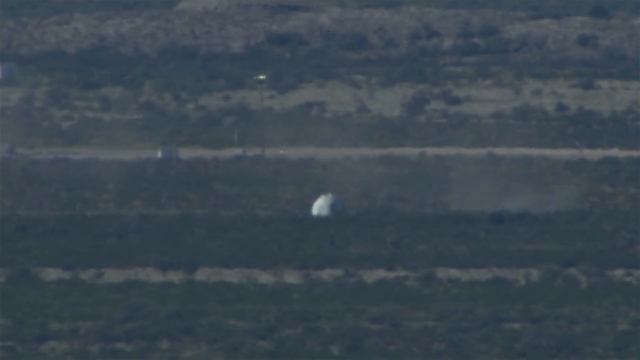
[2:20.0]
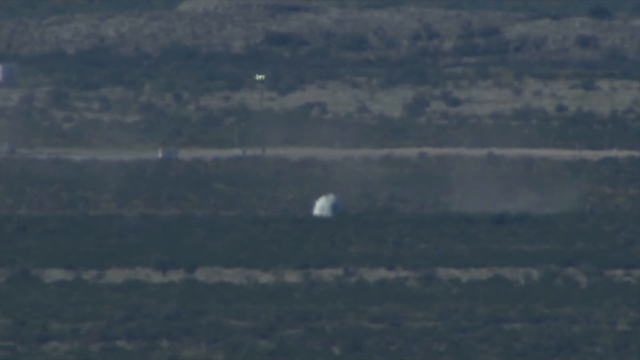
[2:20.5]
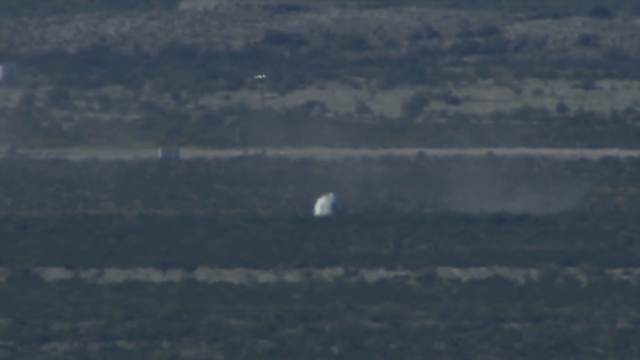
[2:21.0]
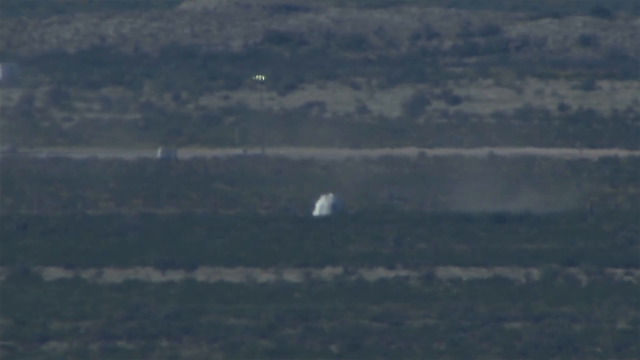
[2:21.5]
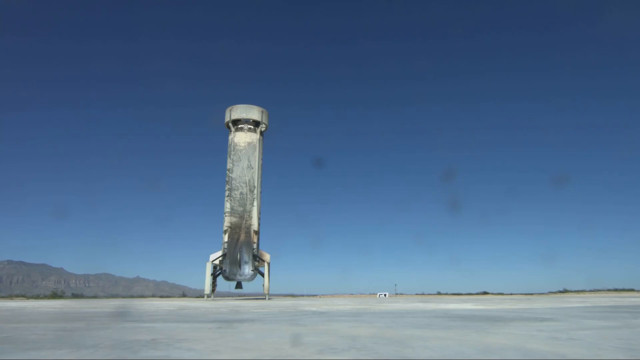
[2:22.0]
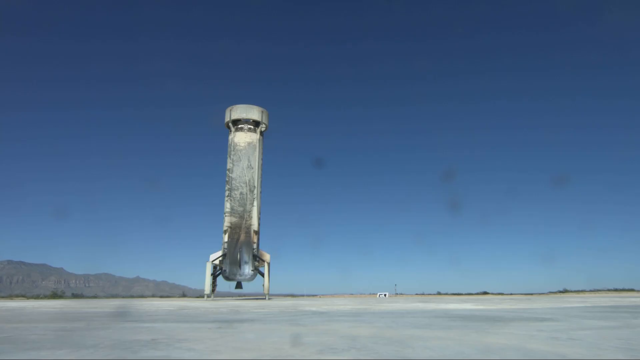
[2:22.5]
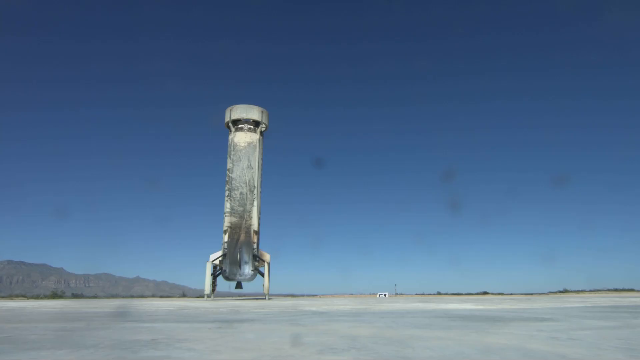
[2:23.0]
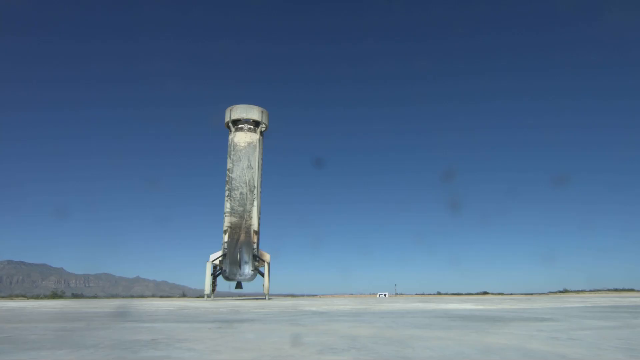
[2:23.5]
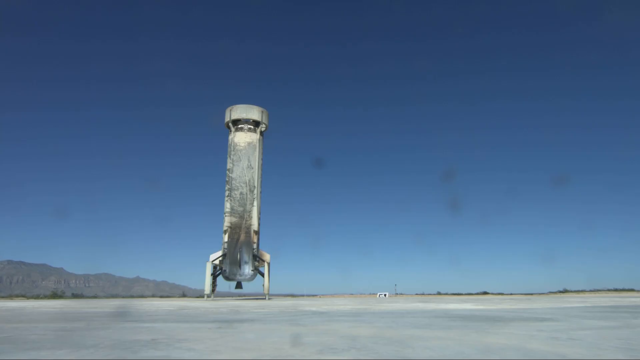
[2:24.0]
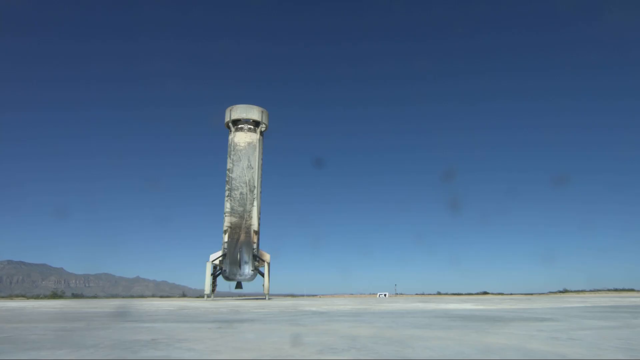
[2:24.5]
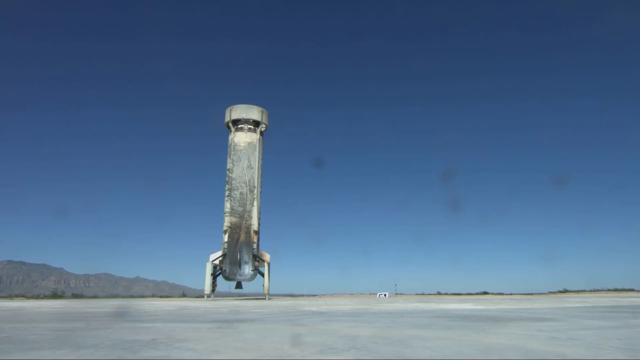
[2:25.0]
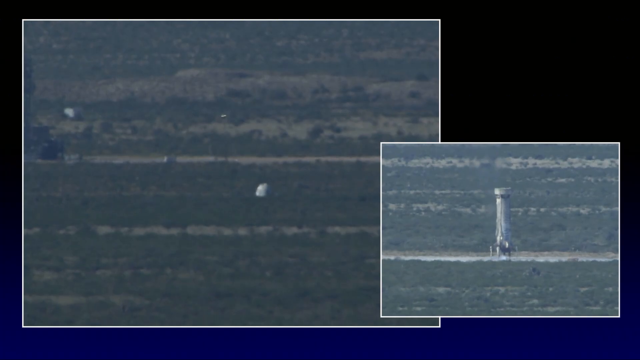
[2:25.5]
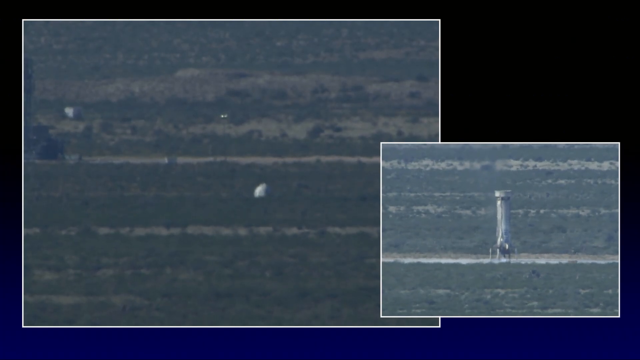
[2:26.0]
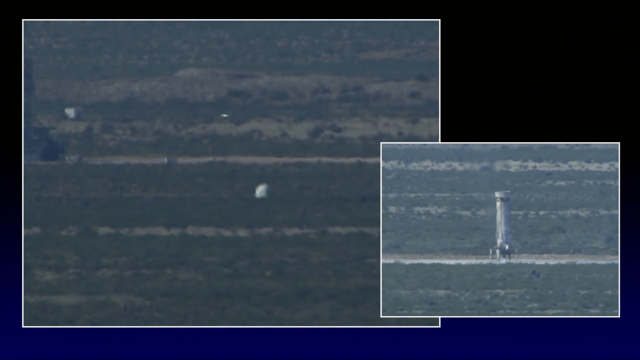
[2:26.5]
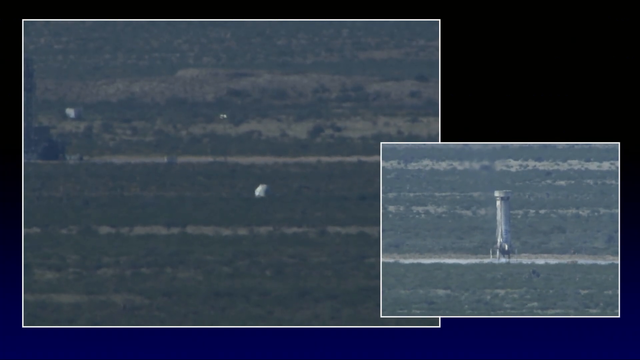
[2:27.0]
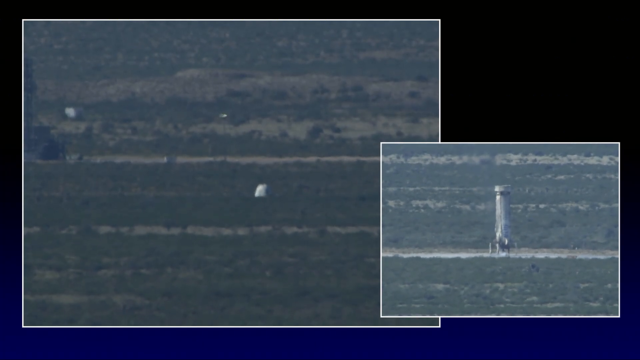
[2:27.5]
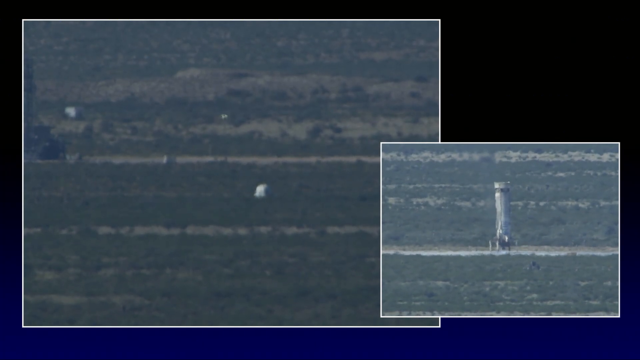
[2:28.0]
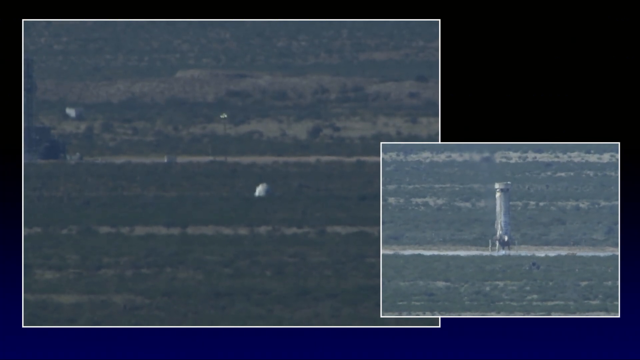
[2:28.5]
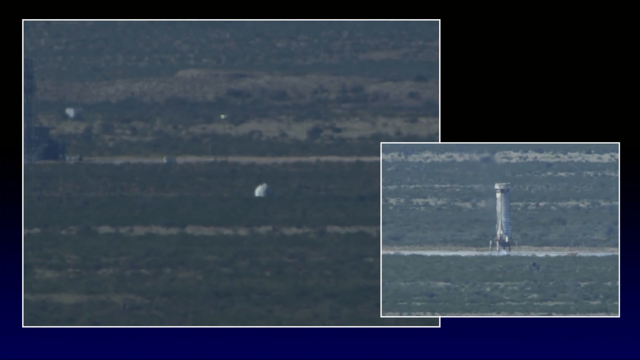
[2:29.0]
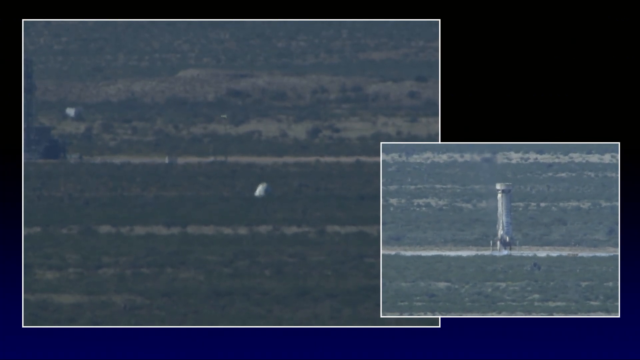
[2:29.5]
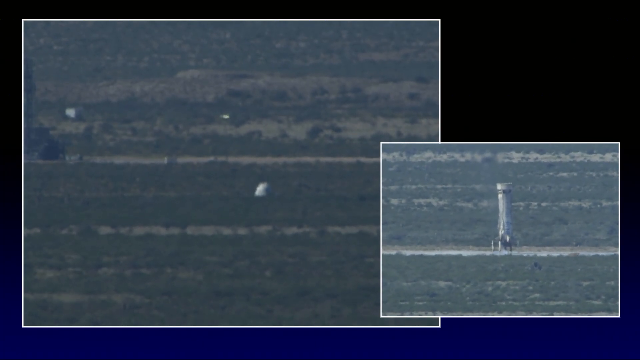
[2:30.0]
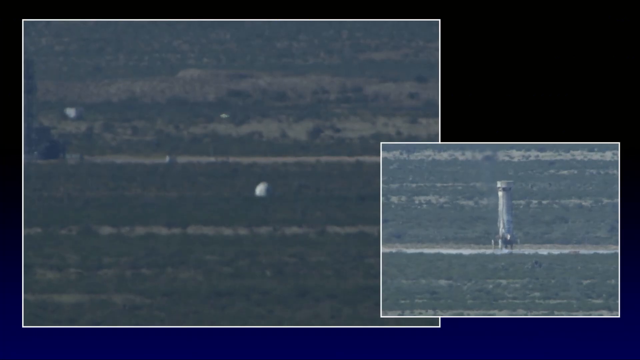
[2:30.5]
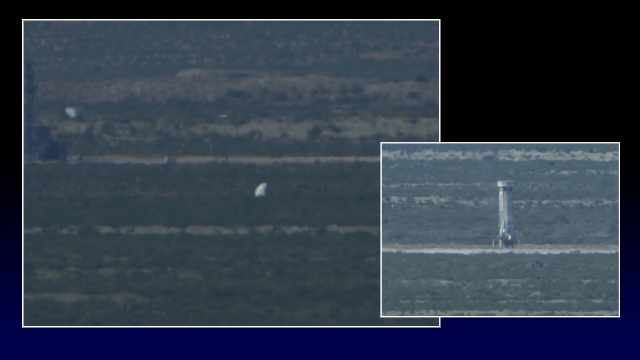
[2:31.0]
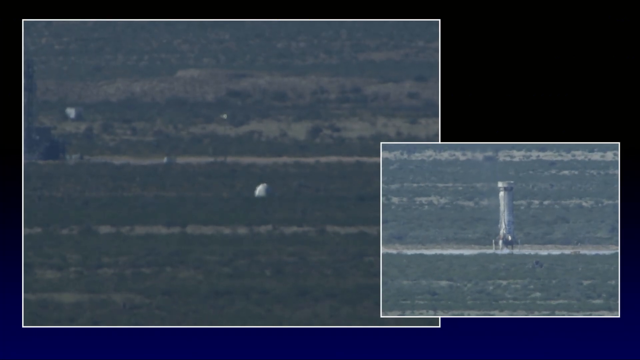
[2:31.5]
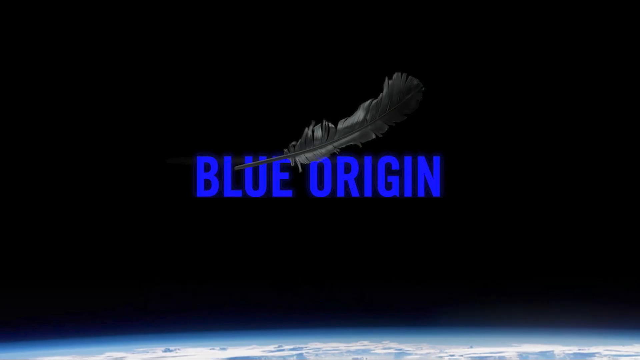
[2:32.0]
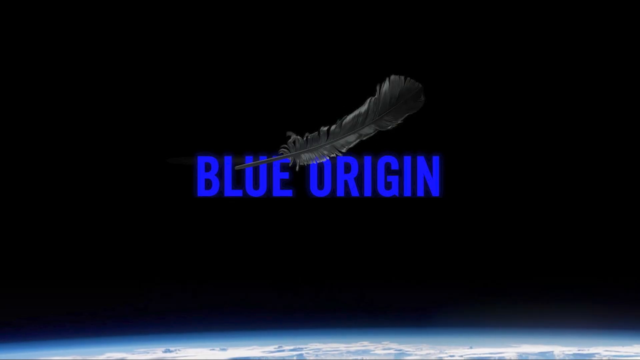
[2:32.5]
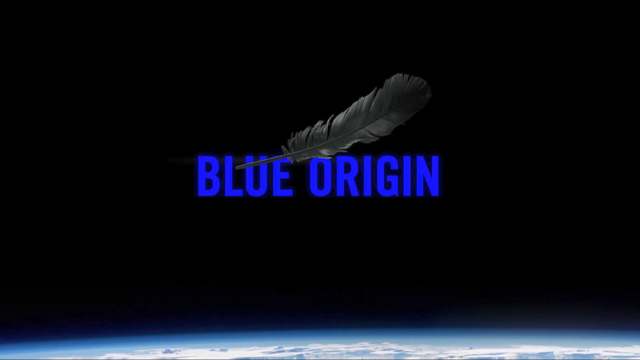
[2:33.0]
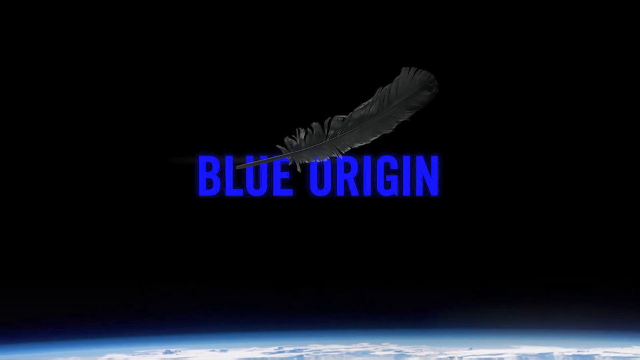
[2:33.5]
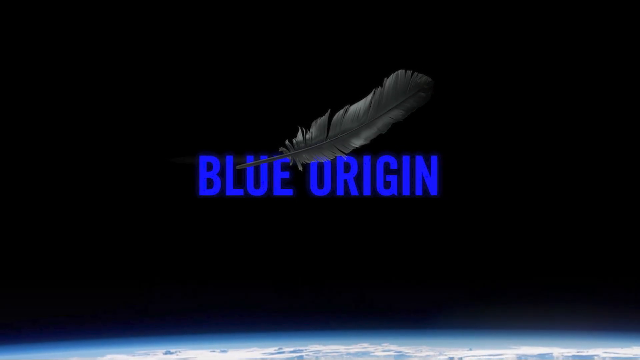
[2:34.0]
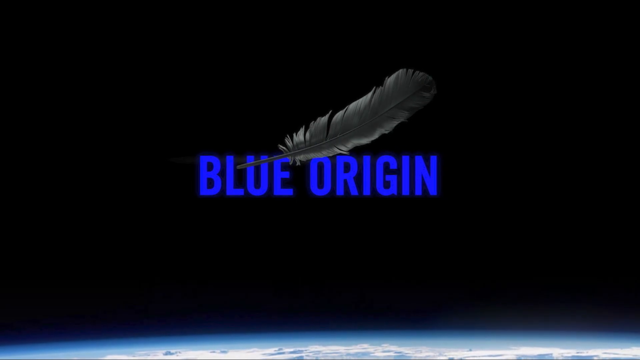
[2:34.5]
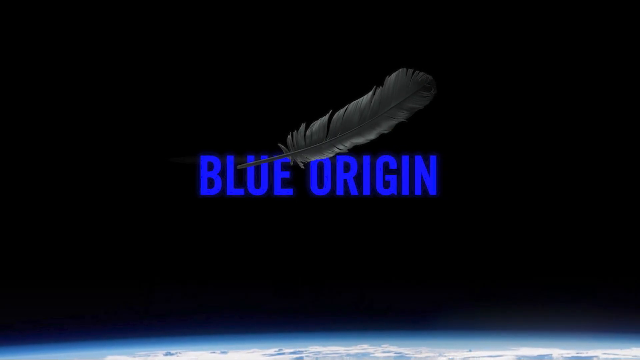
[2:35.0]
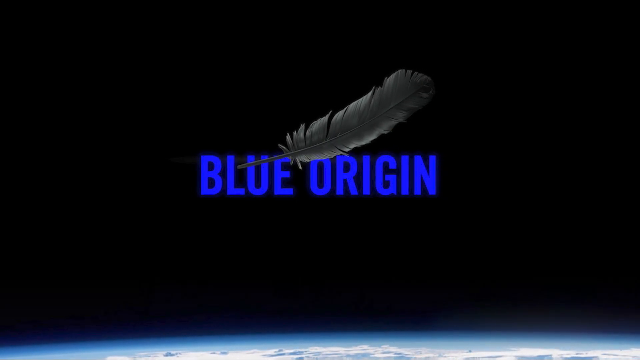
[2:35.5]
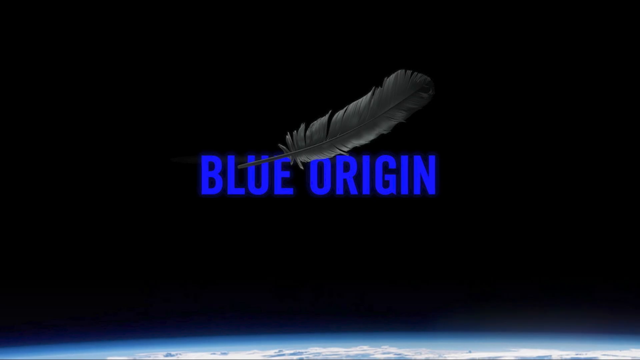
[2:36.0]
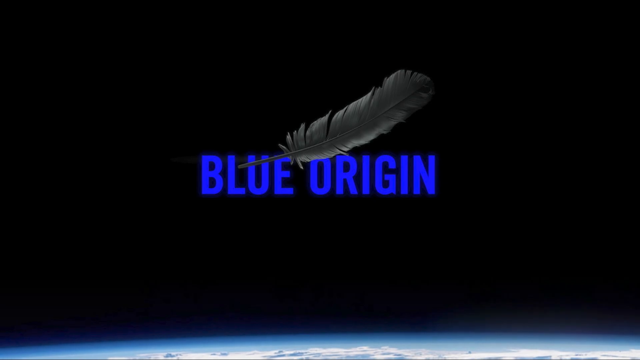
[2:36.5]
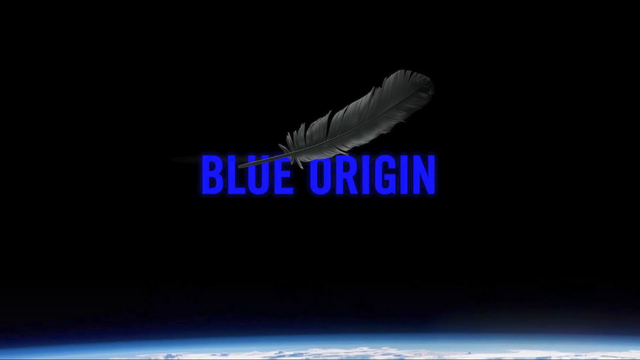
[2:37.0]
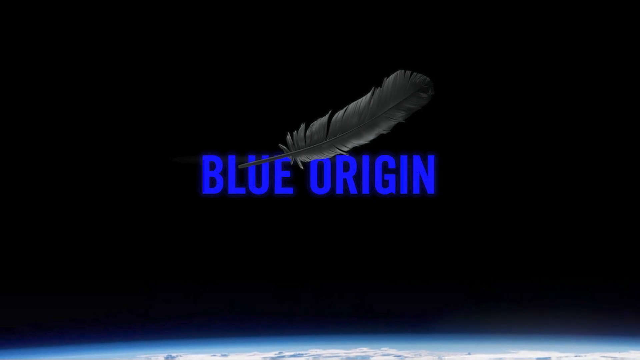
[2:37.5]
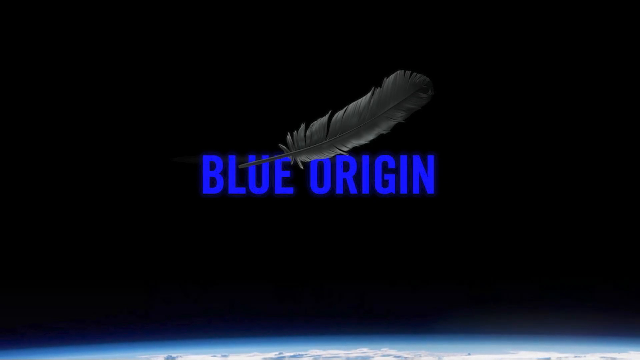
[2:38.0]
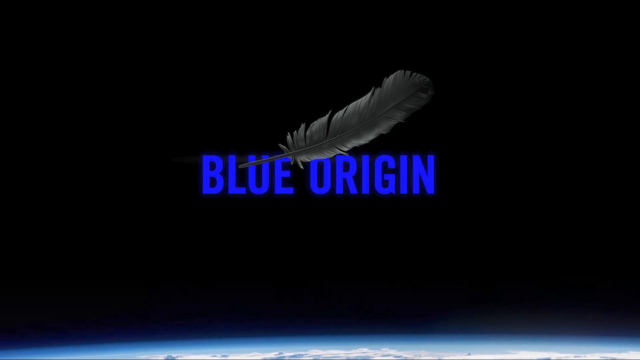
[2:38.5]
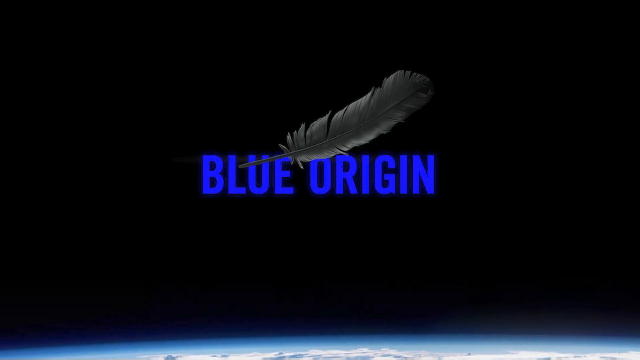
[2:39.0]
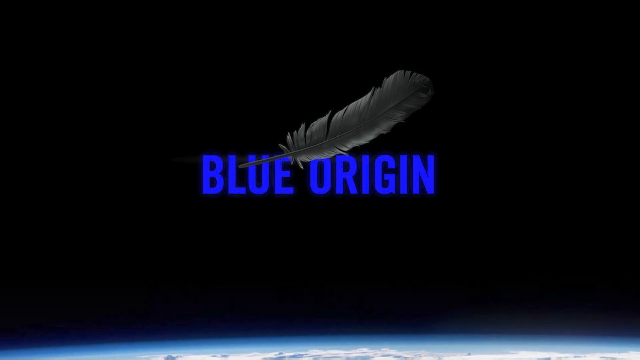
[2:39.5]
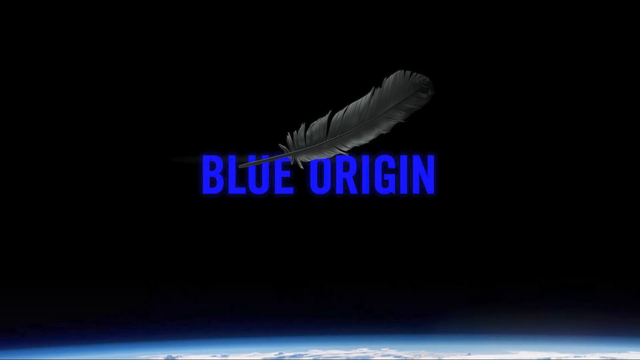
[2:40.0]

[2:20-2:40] A distant shot shows what looks like the nose cone resting in the middle of the otherwise barren desert landscape, with a brown, dark brown and tan hill behind it and black empty fields right in front of it. The nose cone appears slightly obscured by a small hill and shimmers in the heat. The video then changes to the piece of rocket that launched the capsule, now quiet and sitting on the ground with the dust gone. It has serious burn marks all up its side and rests on four legs, which extended as it began to descend. Next, two inset photos appear: the larger one on the left shows the capsule, everything shimmering in the heat, and the smaller one on the right slightly overlaps it and shows the part of the rocket that delivered the payload, also shimmering in the heat. Then a black screen appears with "Blue Origin" in blue, over which is a drawing of a gray feather ruffling slightly in the breeze.